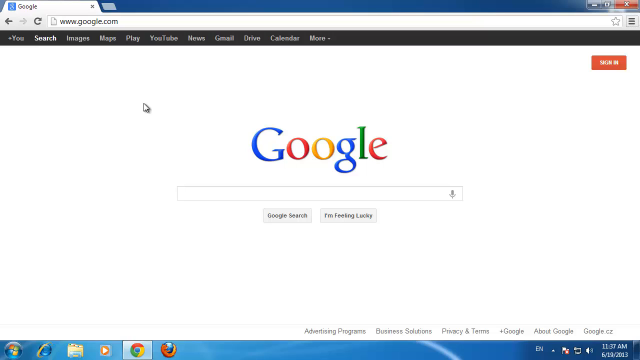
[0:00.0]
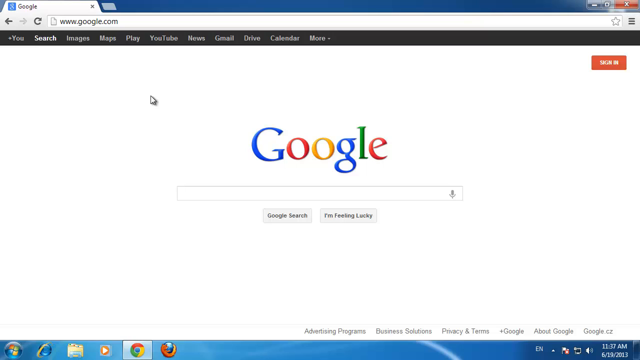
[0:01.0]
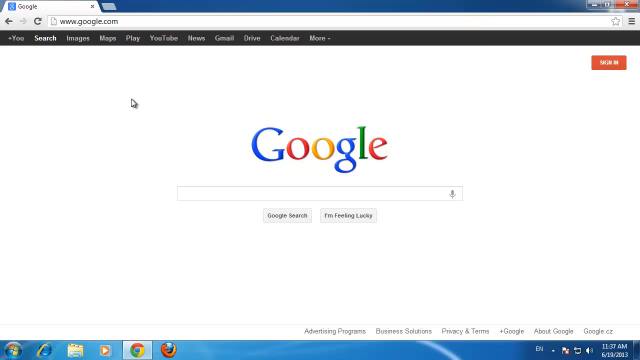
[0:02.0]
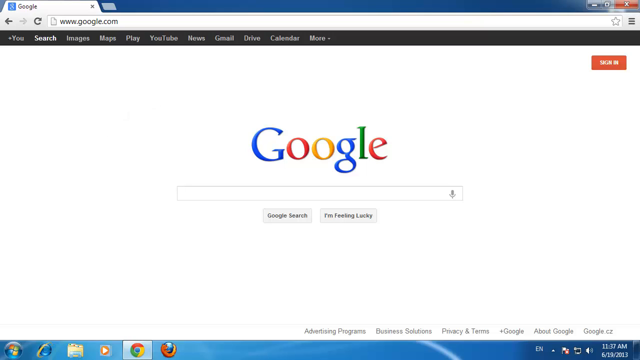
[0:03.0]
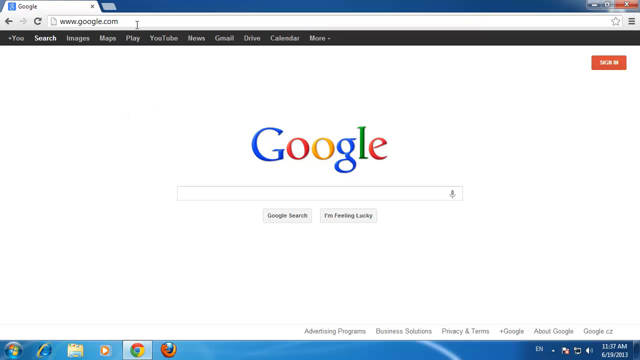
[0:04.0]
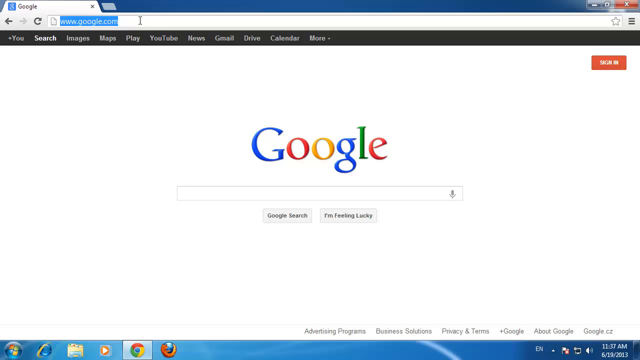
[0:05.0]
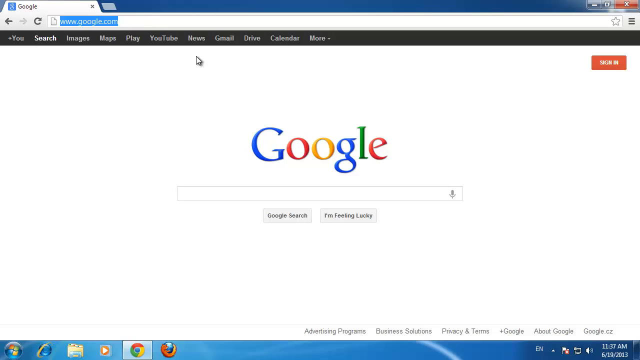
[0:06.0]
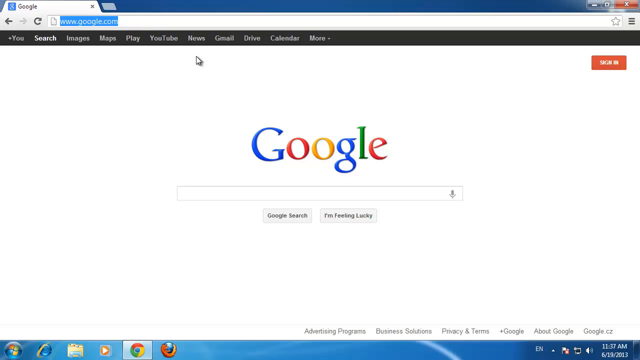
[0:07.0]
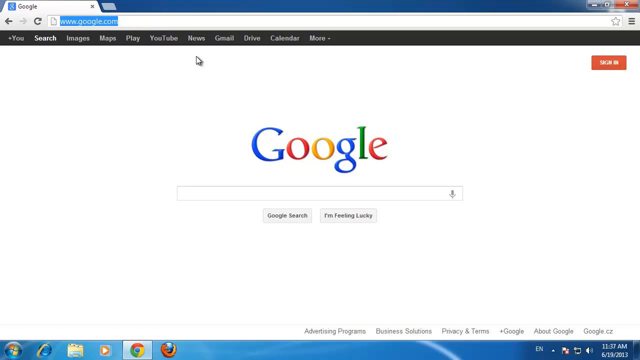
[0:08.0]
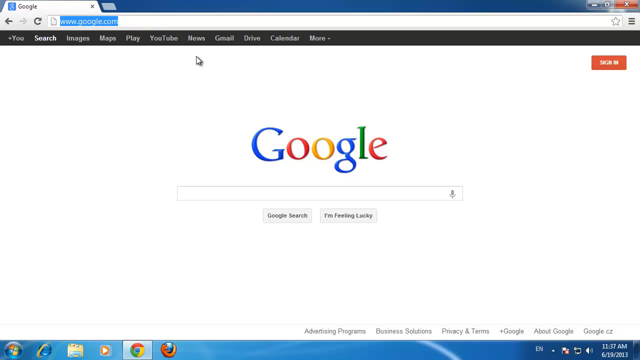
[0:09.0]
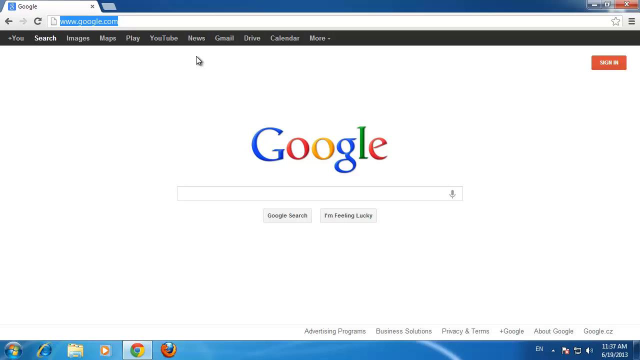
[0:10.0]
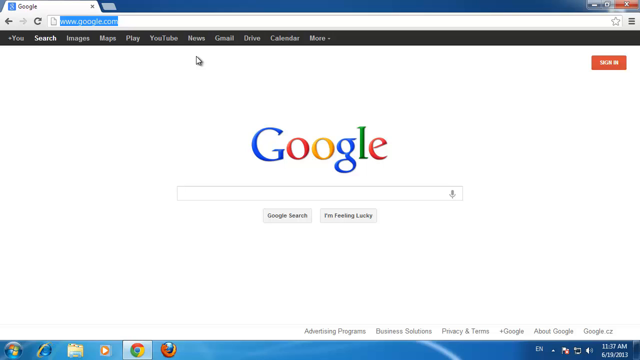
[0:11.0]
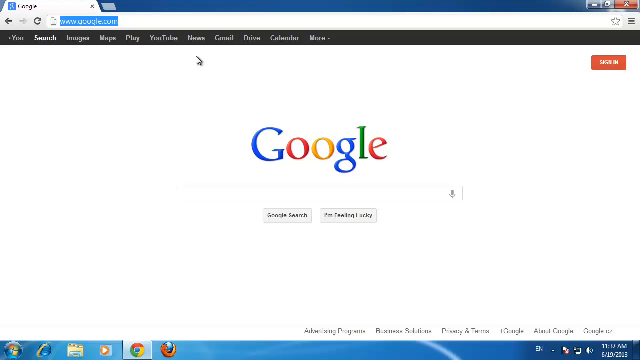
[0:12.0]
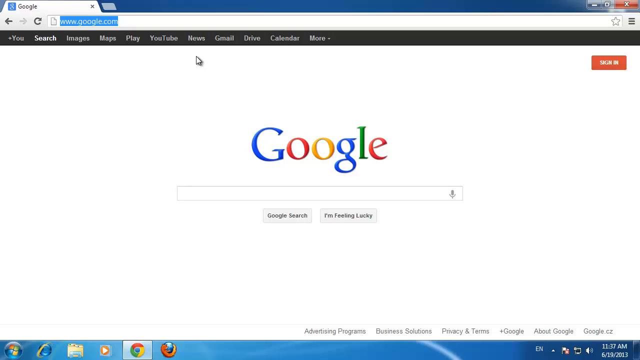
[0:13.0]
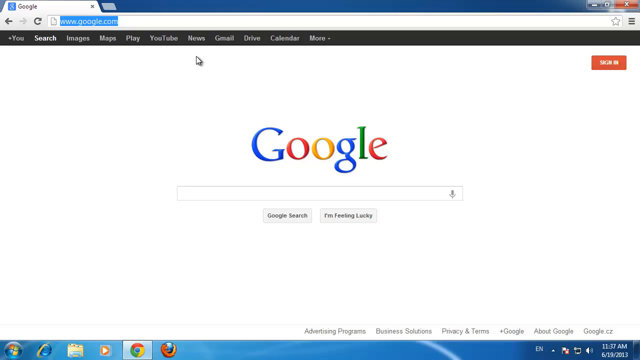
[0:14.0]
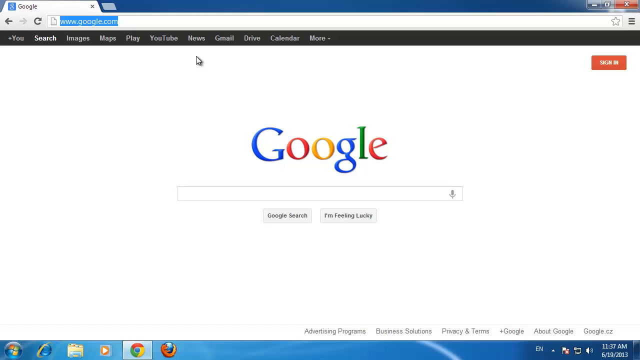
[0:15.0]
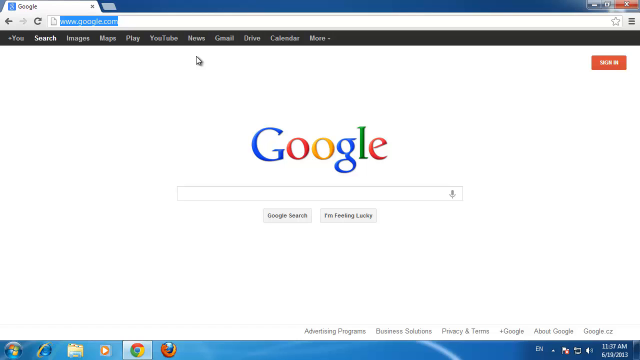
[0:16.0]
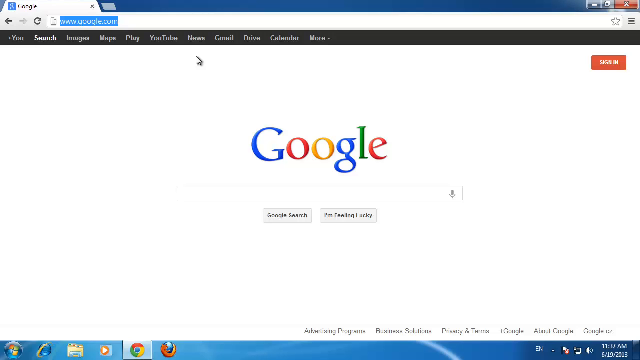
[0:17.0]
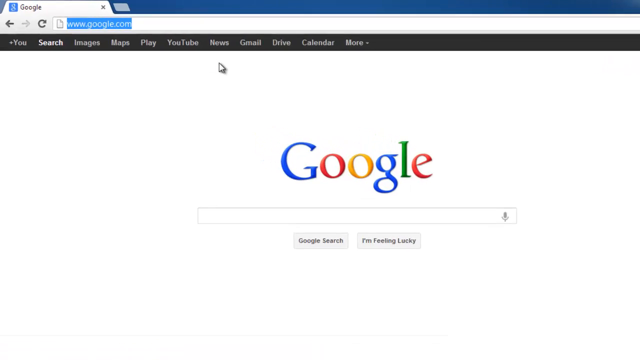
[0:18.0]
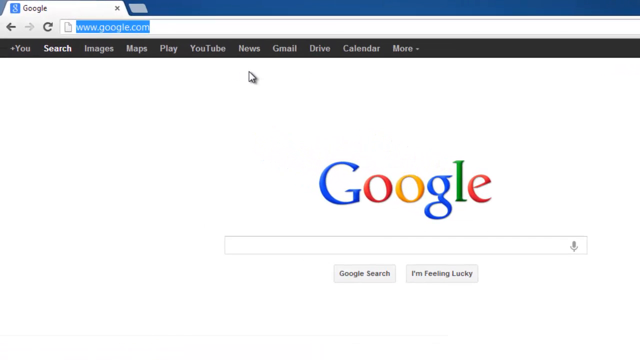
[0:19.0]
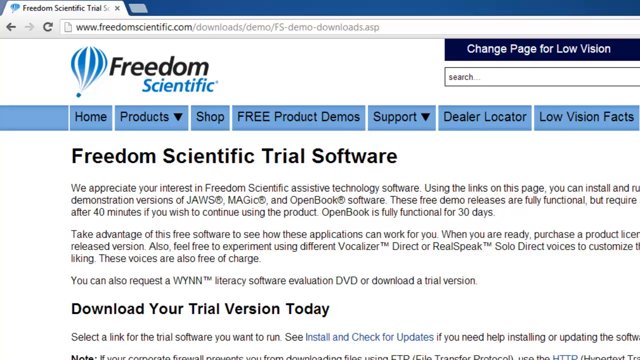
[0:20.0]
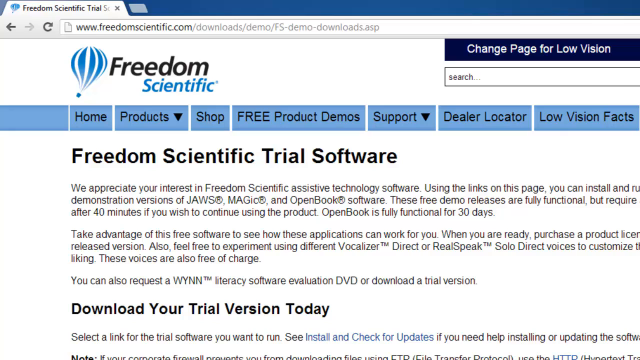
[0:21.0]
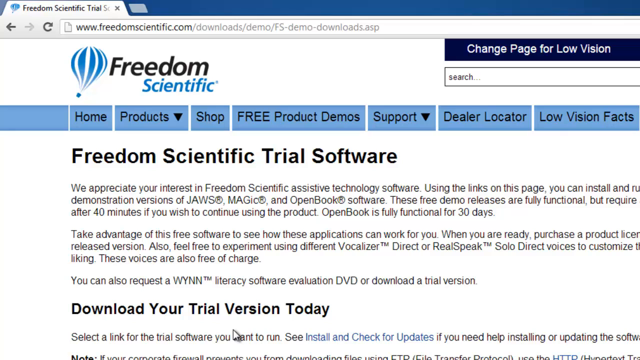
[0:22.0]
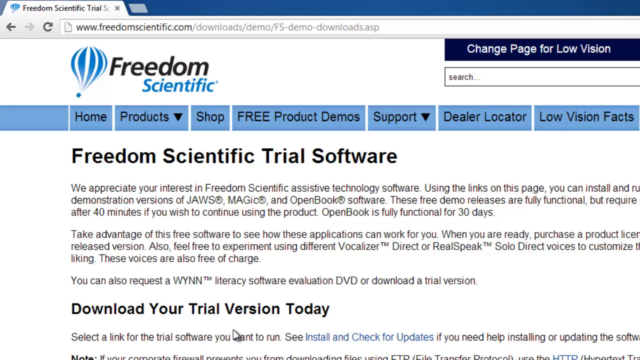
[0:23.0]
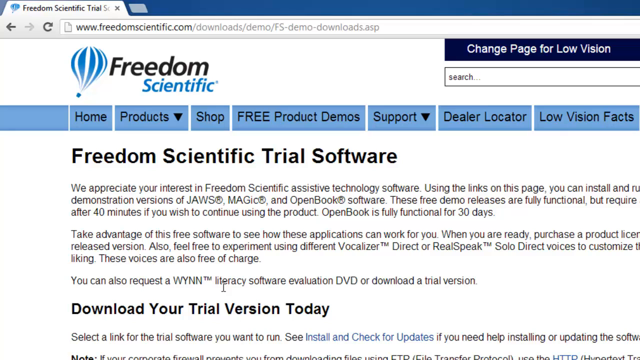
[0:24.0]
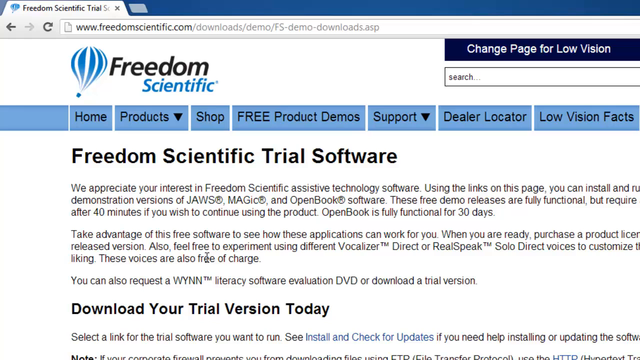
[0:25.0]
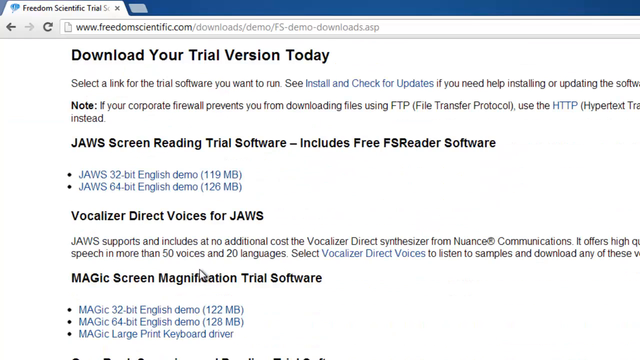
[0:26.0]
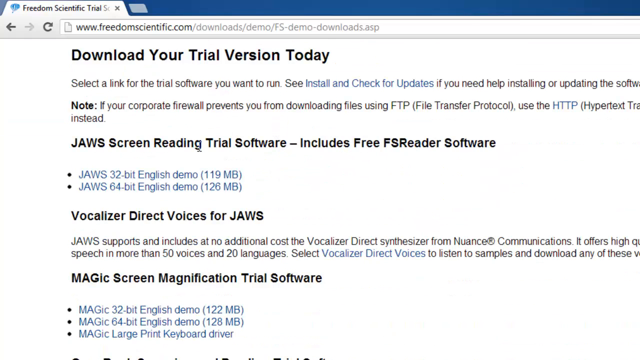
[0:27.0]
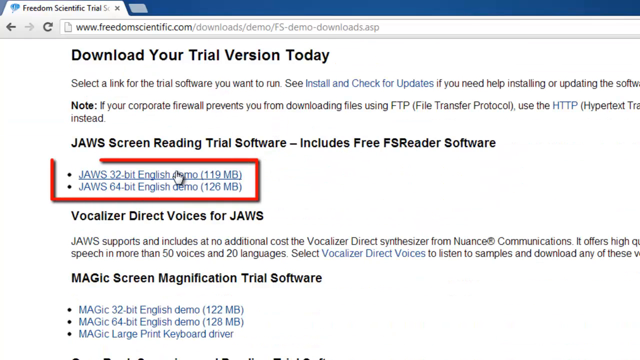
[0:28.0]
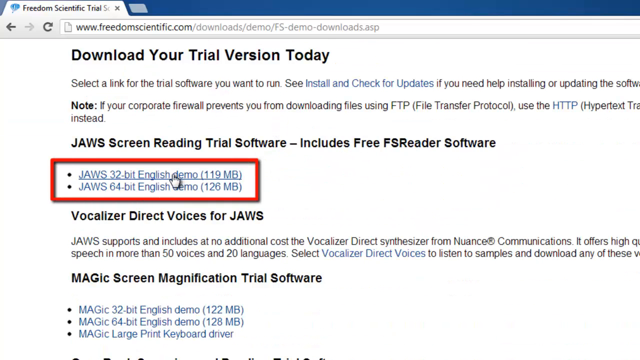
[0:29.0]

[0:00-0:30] A web browser has a single tab open on the Google search engine page. Options along the top of the screen include You, Search, Images, Maps, Play, YouTube, News, Gmail, Drive, Calendar, and more, with a red sign-in button in the upper right corner. The Google logo is in the center, with a blue G, a red O, a yellow O, a lowercase blue g, a green l and a red lowercase e. Beneath the logo is the text box, along with the options "Google search" and "I'm feeling lucky", and a microphone icon in the search box for speaking the search instead of typing it. The mouse cursor moves around the top portion of the page, and the user highlights the Google web address in the browser by double-clicking it.